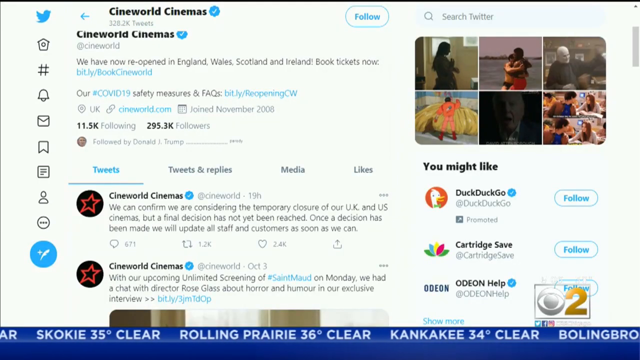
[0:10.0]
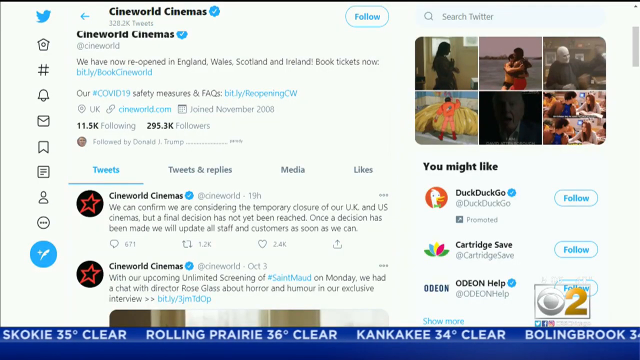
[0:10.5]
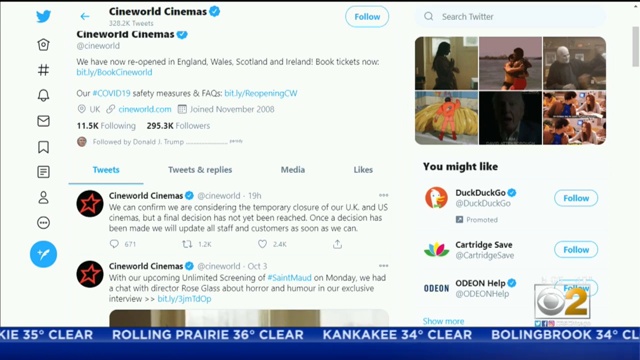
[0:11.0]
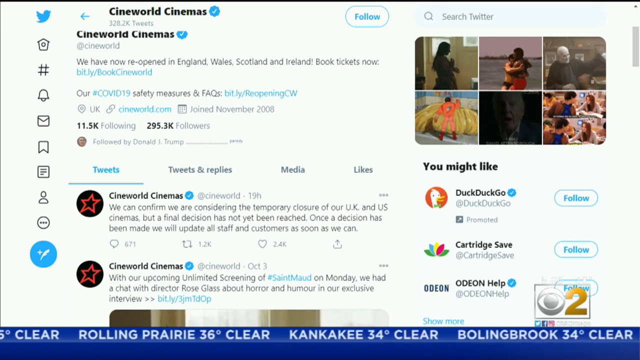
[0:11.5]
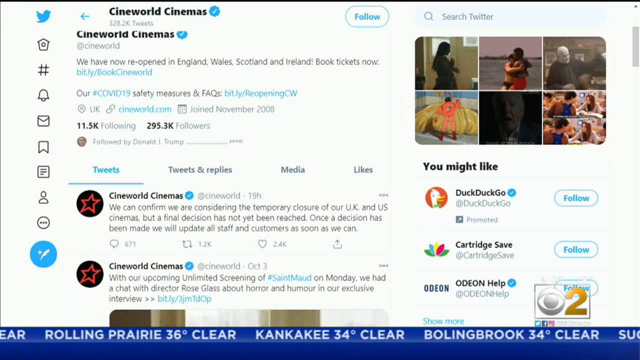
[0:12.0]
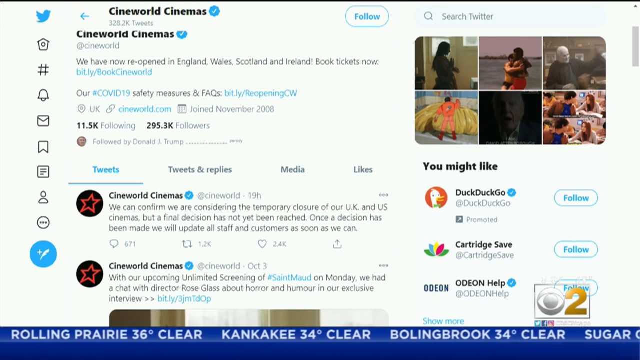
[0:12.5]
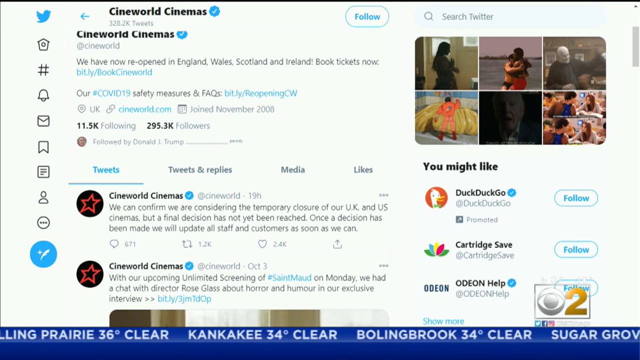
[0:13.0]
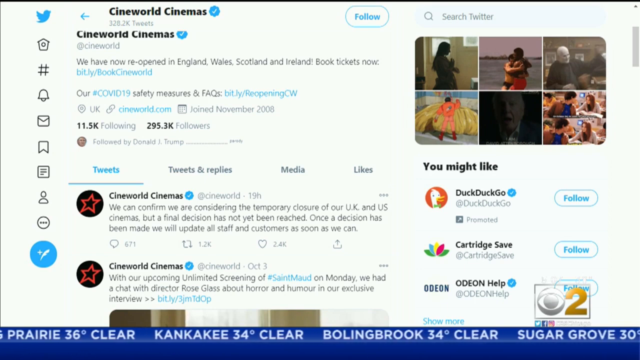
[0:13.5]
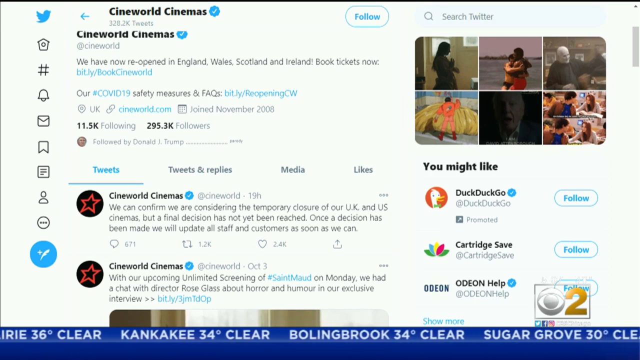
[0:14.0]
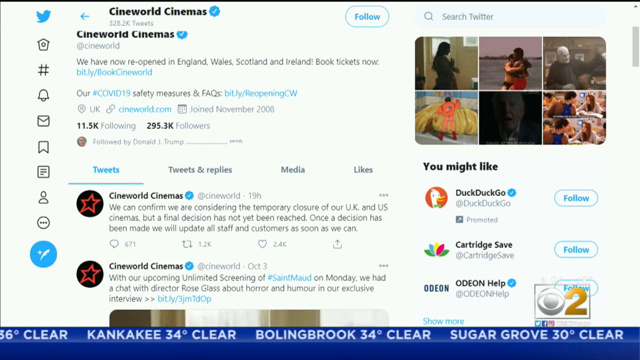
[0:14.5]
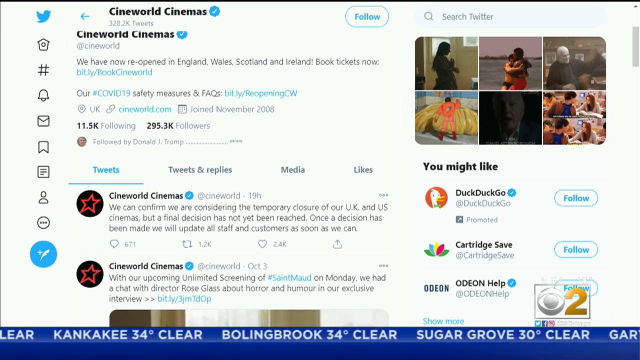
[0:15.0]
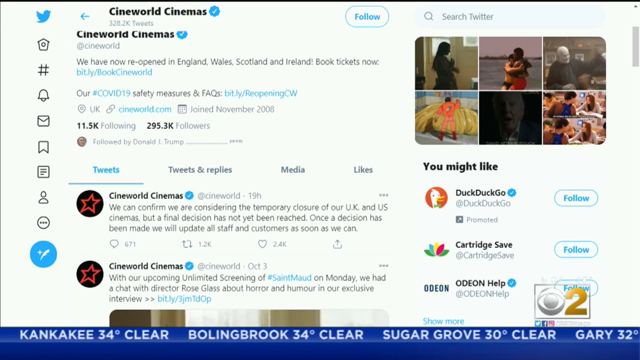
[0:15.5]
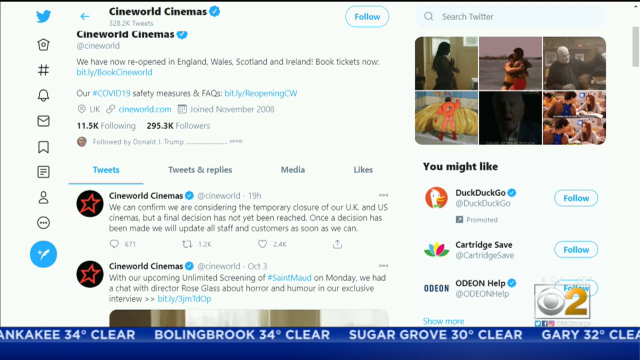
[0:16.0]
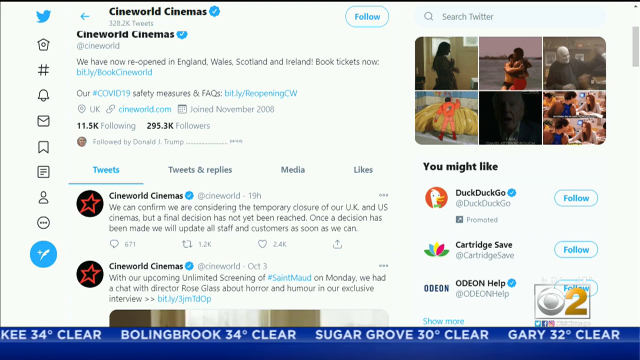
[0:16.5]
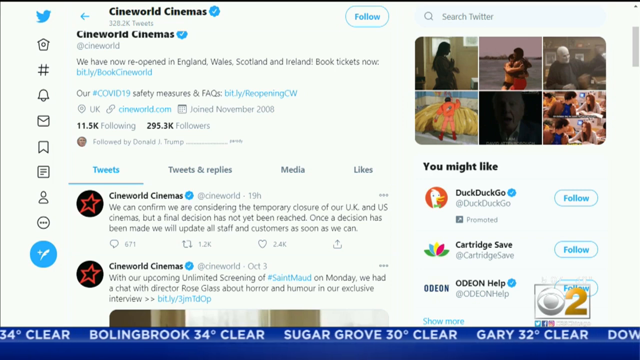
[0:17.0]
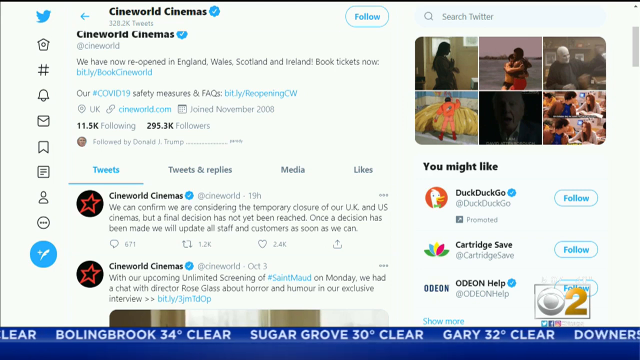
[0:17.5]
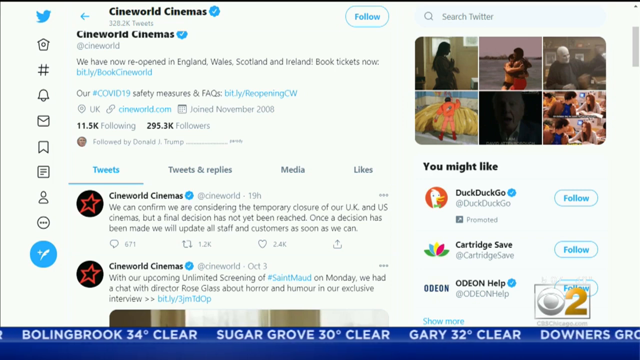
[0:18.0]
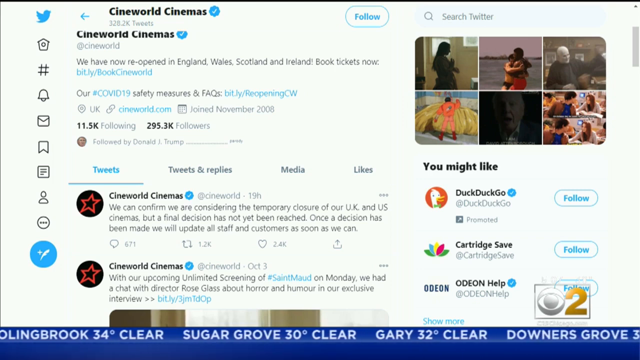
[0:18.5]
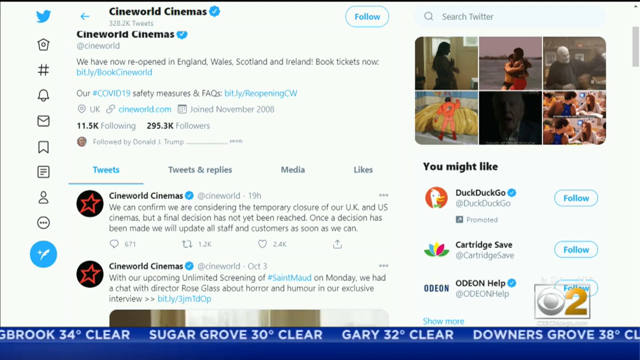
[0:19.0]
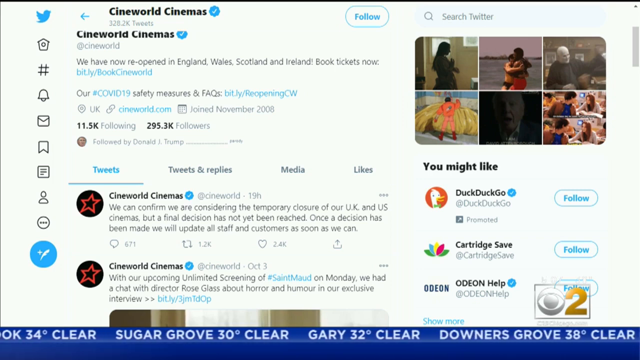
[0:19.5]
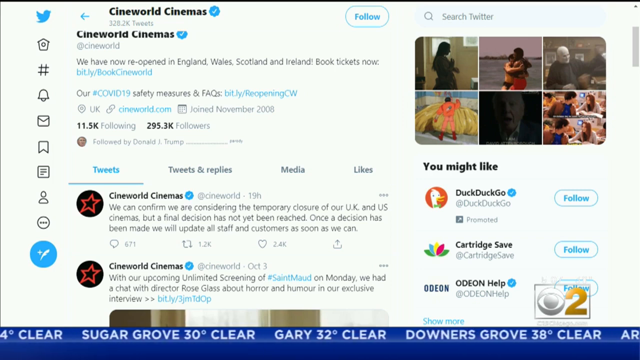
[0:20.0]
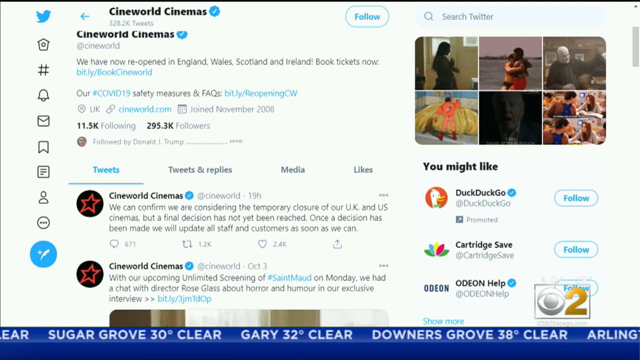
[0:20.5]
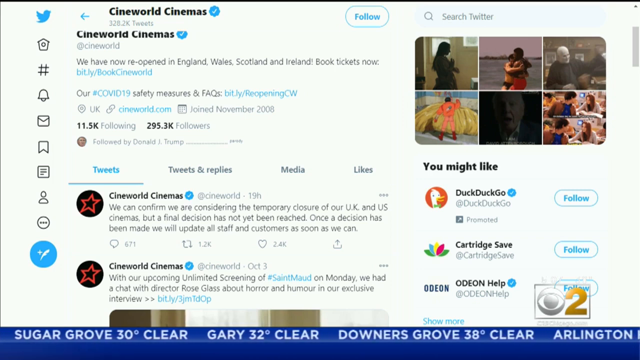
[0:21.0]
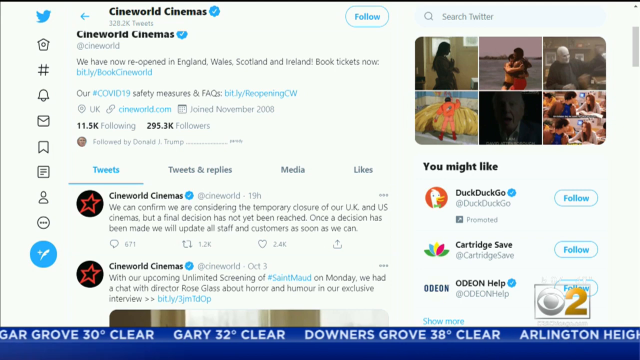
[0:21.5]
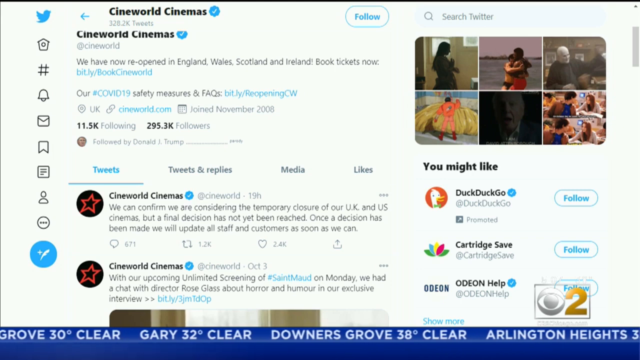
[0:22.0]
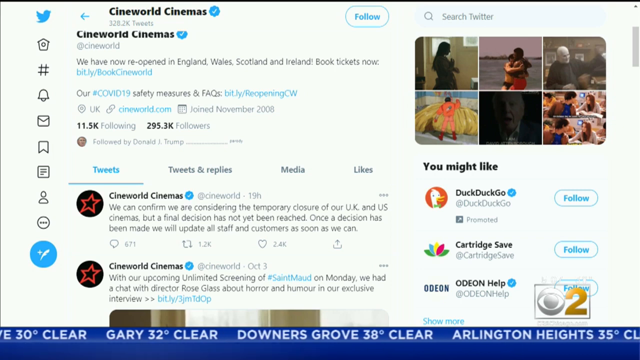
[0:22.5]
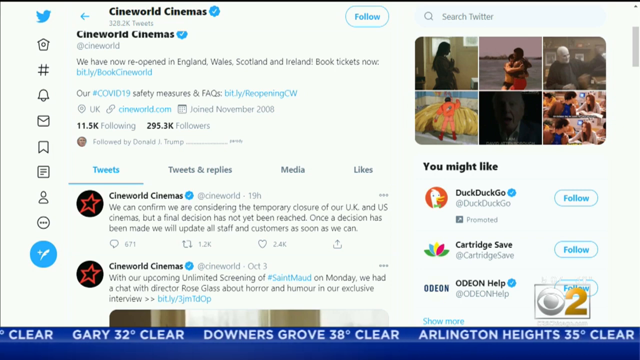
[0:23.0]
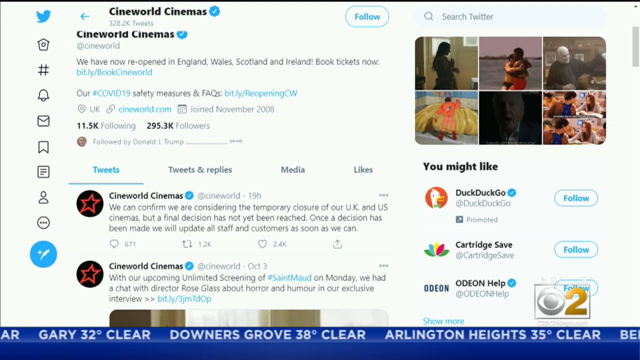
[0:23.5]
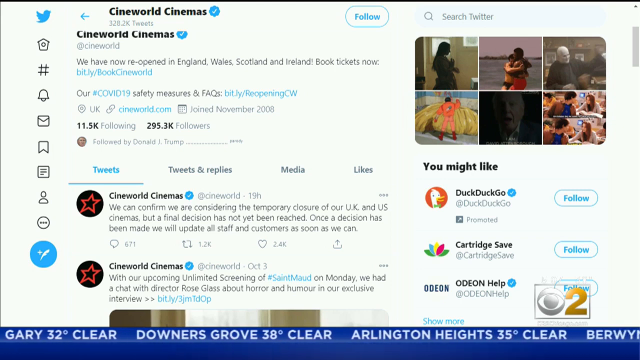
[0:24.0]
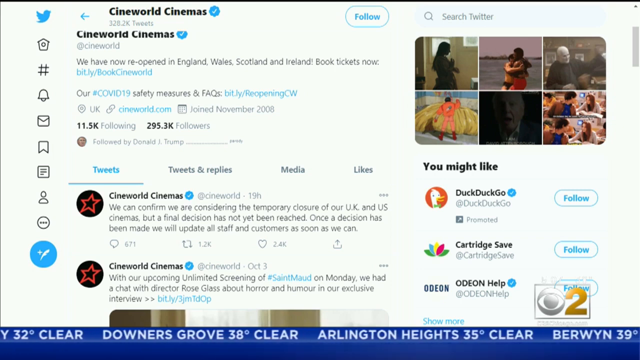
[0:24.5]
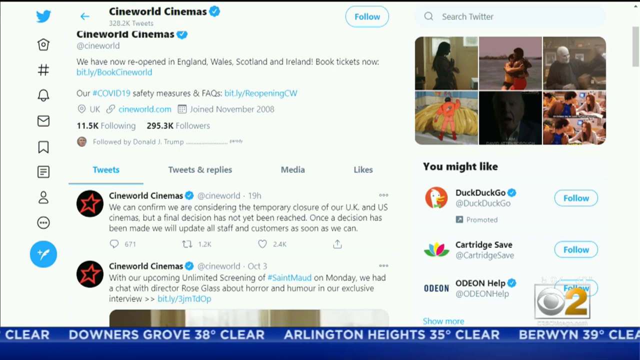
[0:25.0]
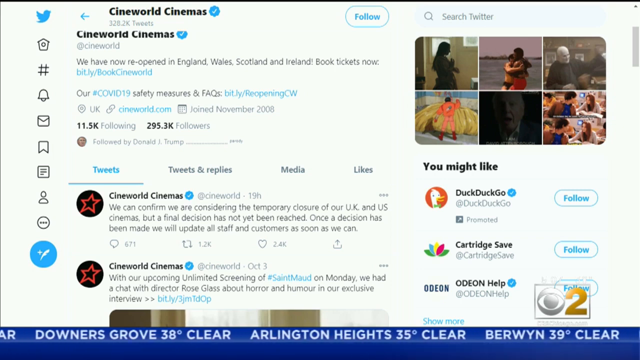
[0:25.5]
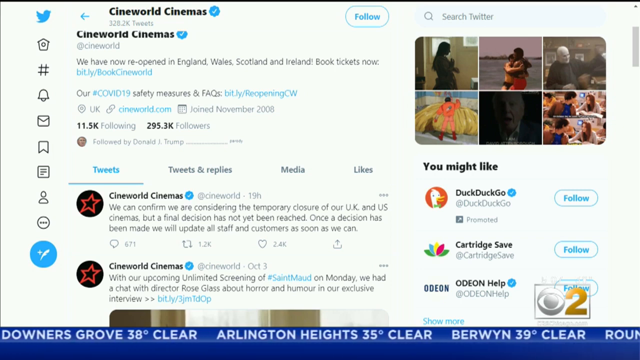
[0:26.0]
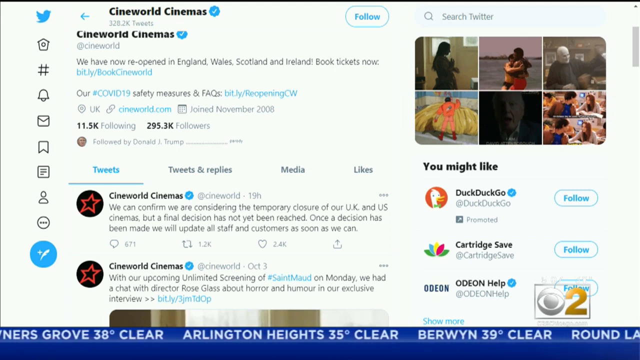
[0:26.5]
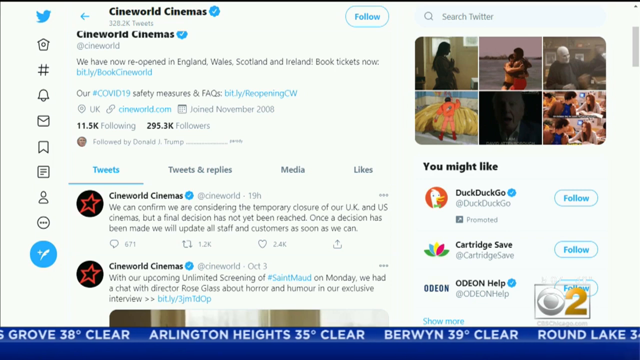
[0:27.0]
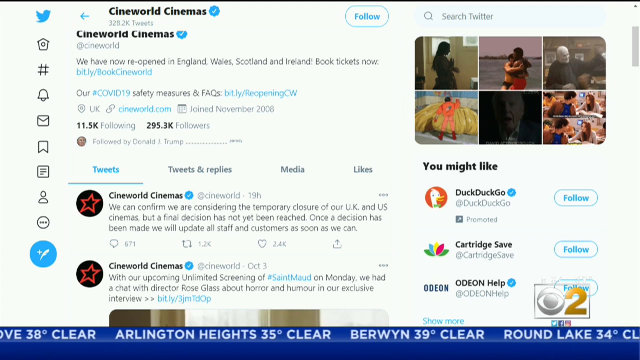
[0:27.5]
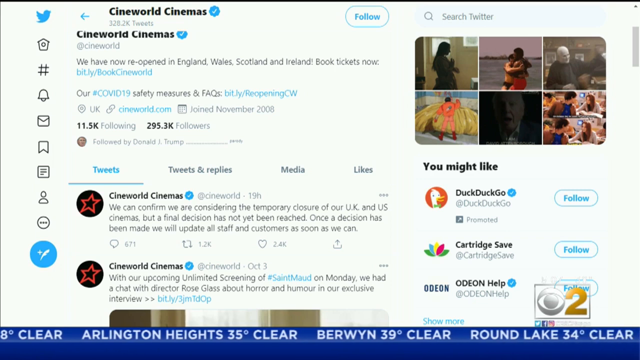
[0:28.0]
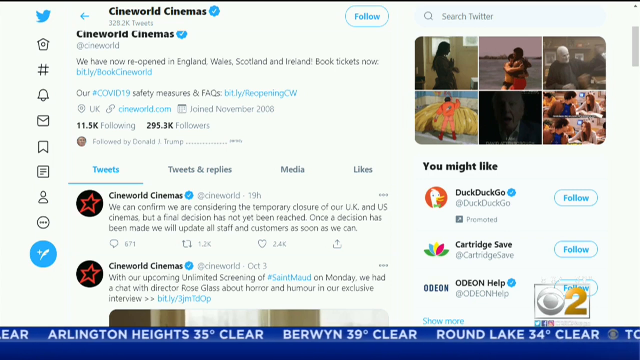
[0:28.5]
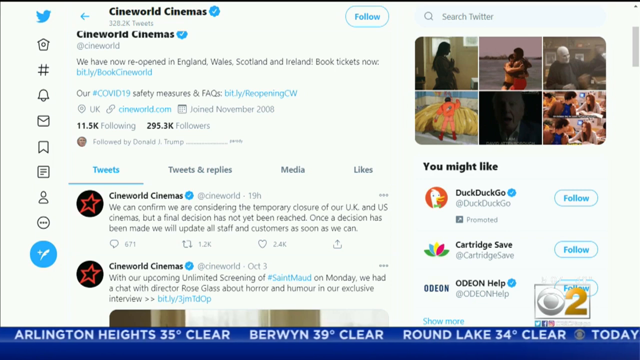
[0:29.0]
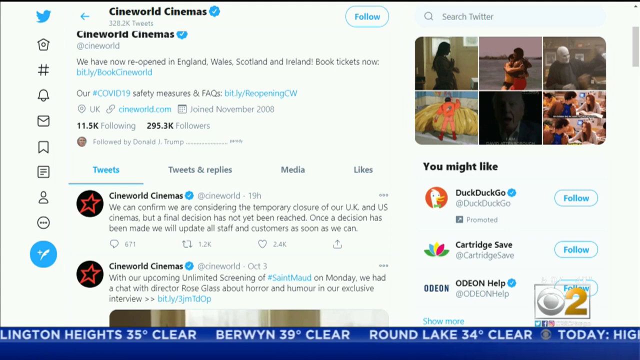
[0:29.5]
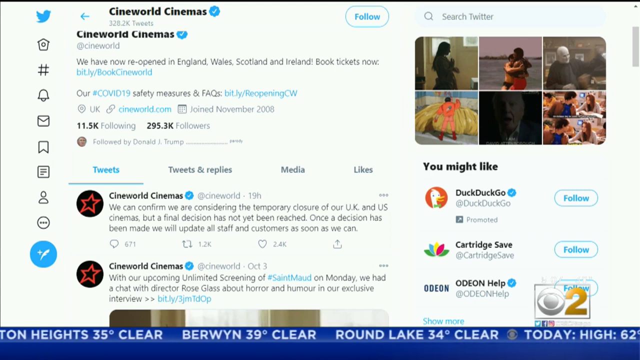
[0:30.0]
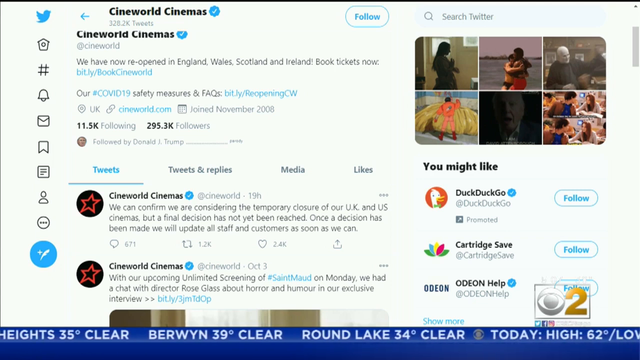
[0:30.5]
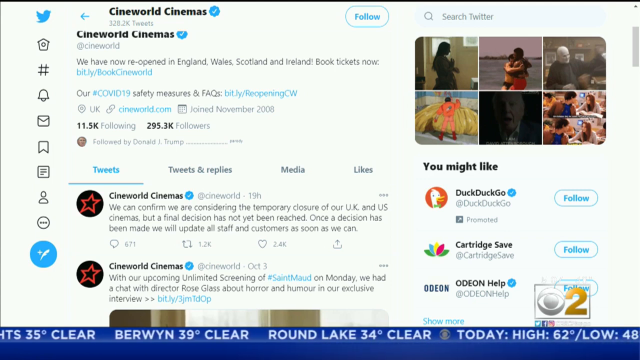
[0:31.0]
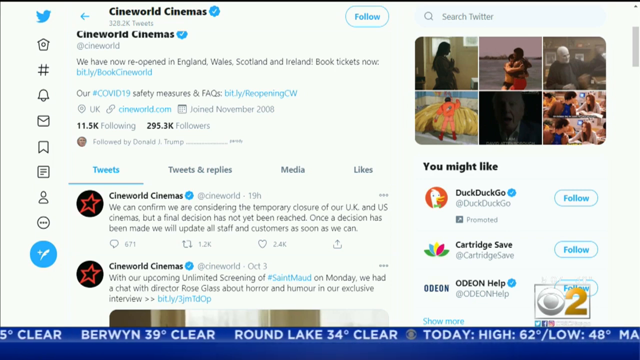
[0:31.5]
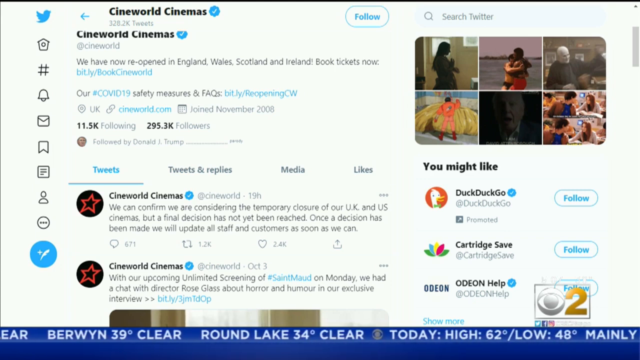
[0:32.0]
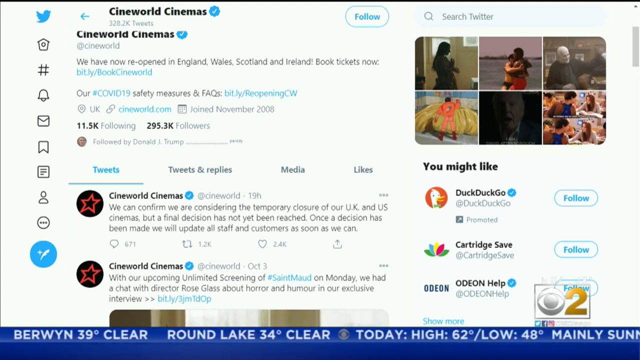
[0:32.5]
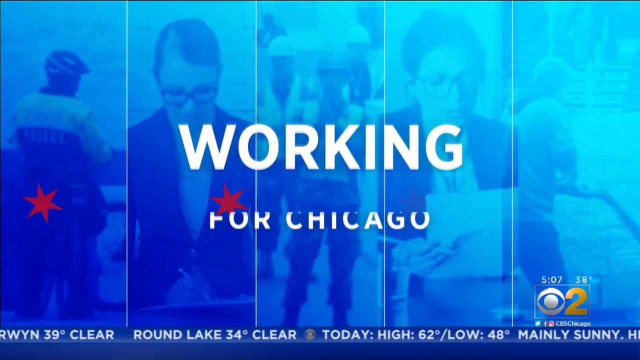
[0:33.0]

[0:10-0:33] A screenshot of the Cineworld Cinemas Twitter page, their own account, shows tweets posted by Cineworld Cinemas. The tweets address the many rumours that have made this a news story and confirm that the company is considering the temporary closure of its UK and US cinemas, that a final decision has not yet been reached, and that once a decision has been made they will update all staff and customers.